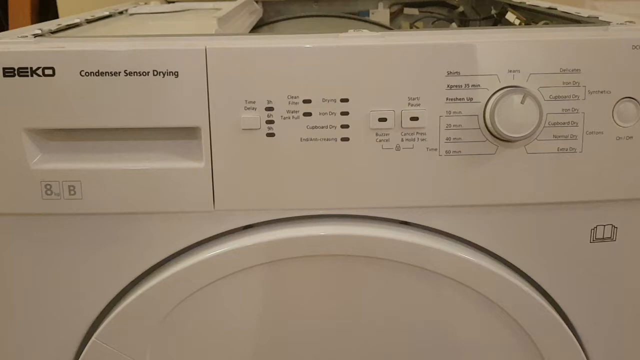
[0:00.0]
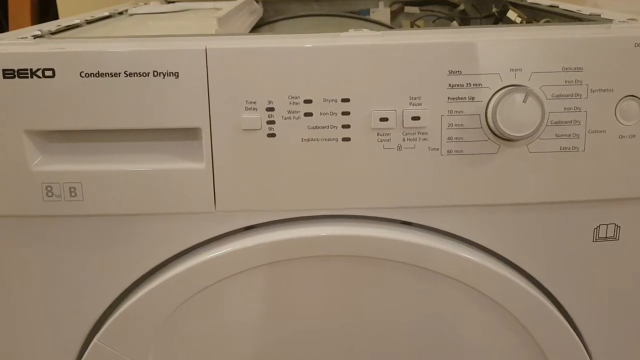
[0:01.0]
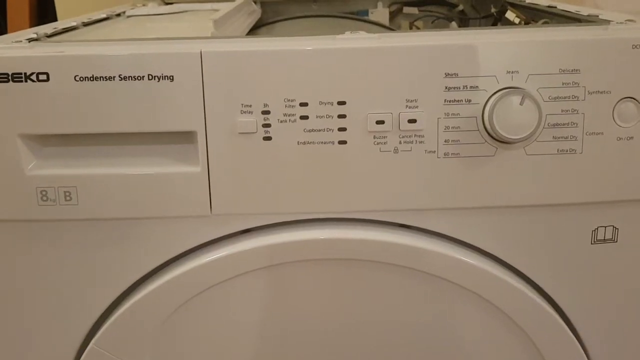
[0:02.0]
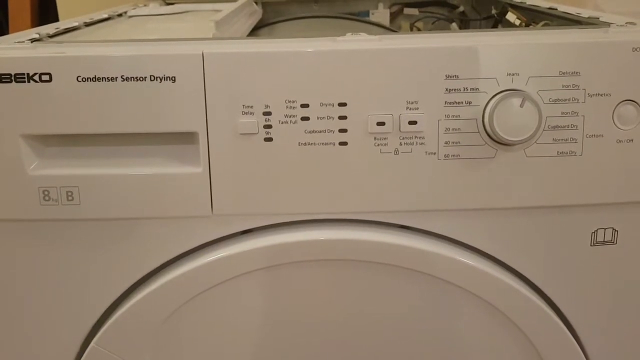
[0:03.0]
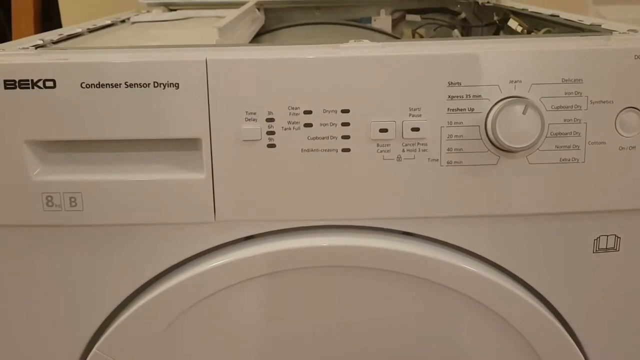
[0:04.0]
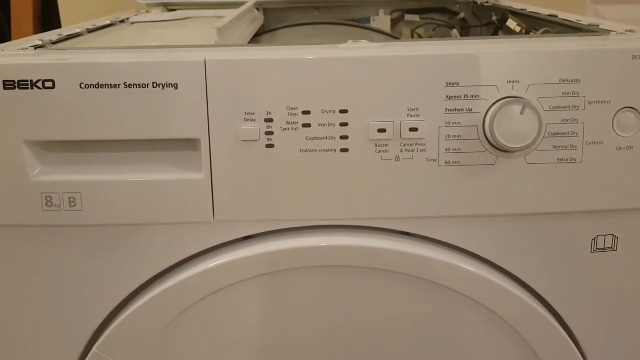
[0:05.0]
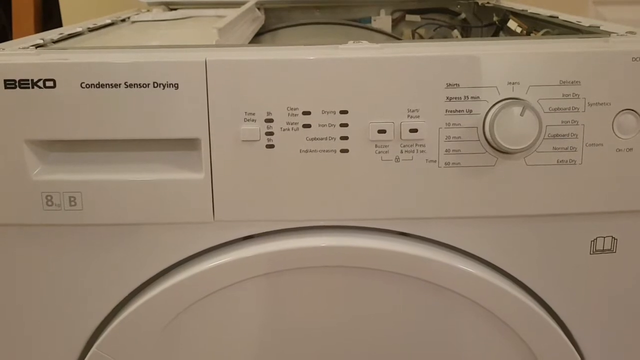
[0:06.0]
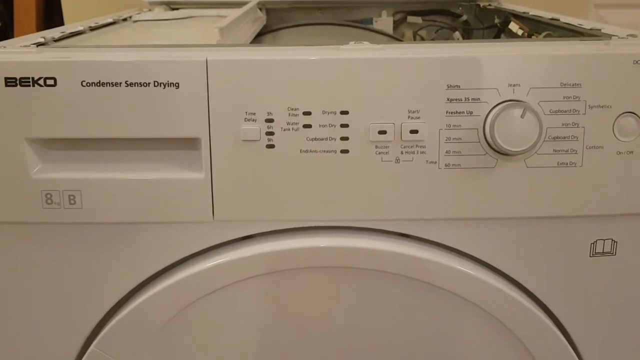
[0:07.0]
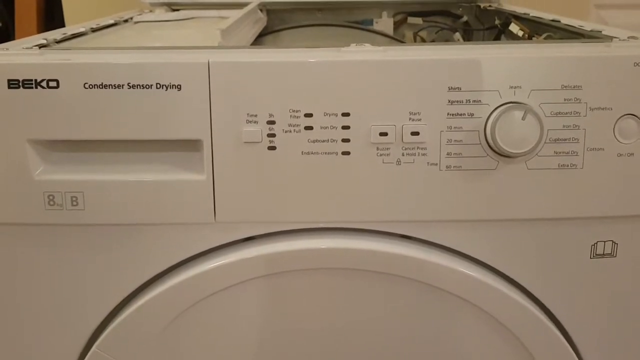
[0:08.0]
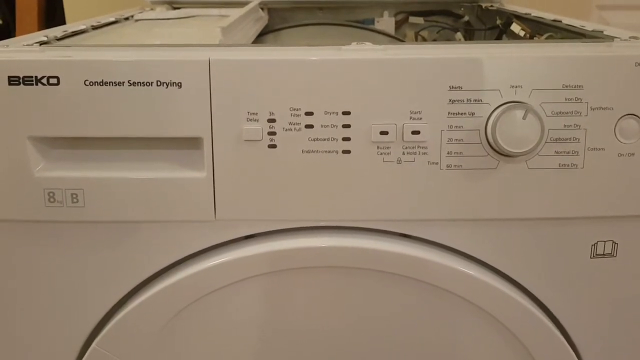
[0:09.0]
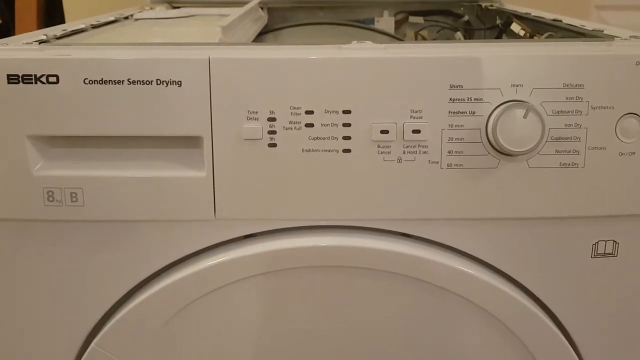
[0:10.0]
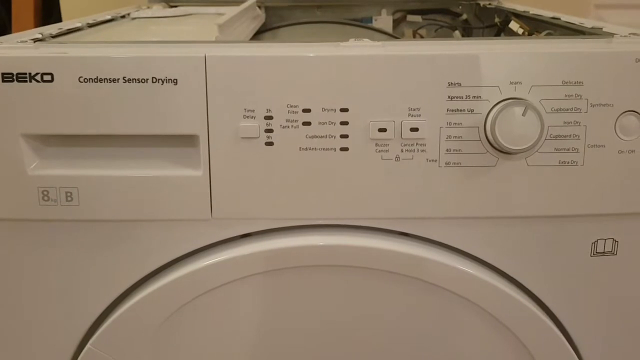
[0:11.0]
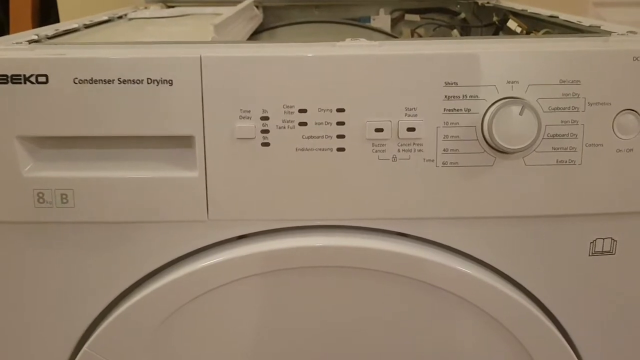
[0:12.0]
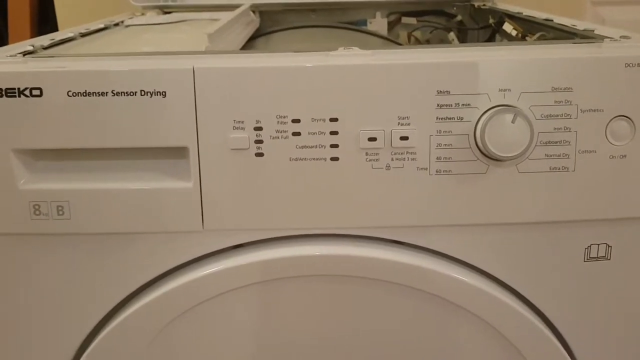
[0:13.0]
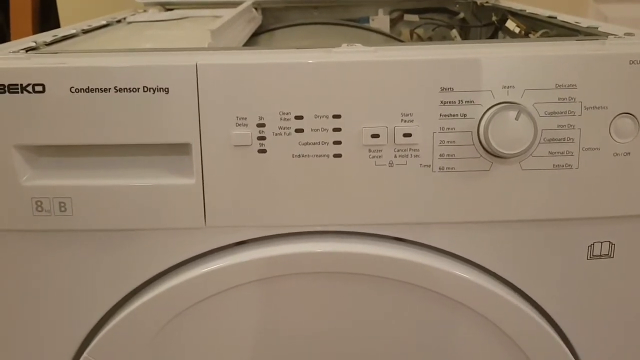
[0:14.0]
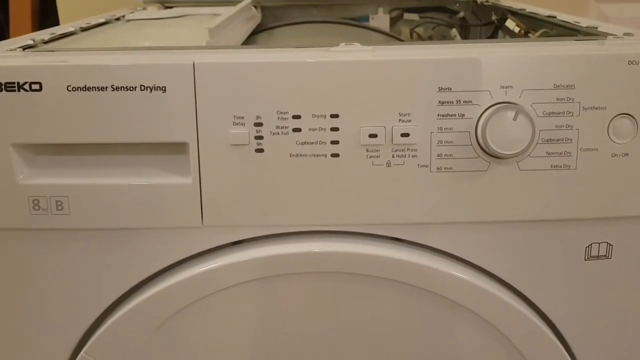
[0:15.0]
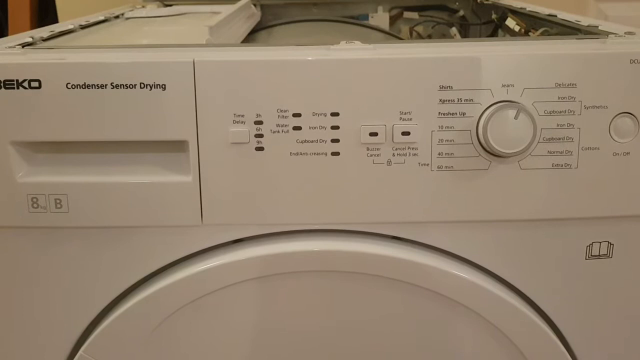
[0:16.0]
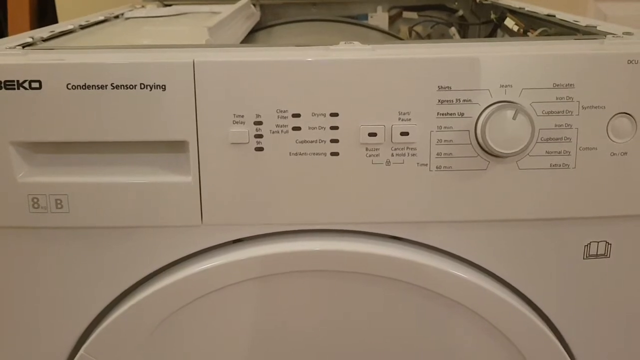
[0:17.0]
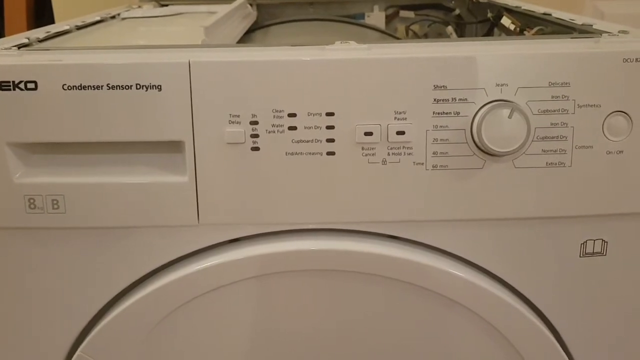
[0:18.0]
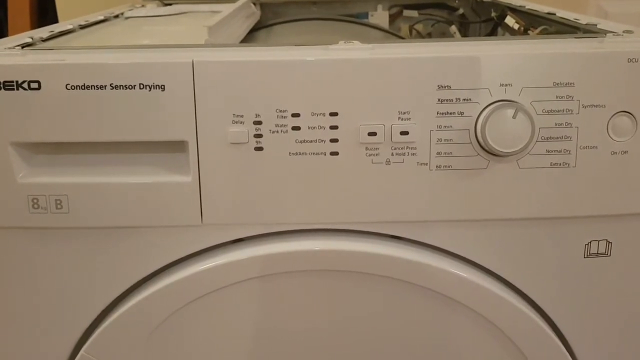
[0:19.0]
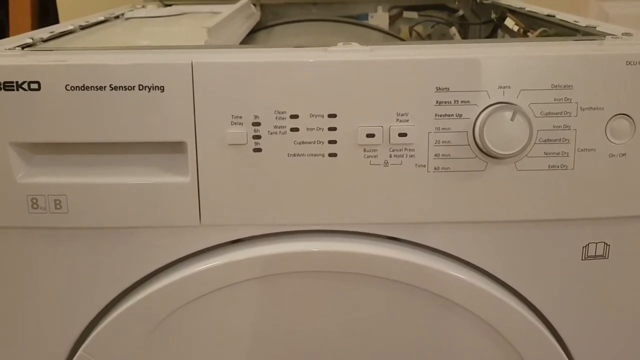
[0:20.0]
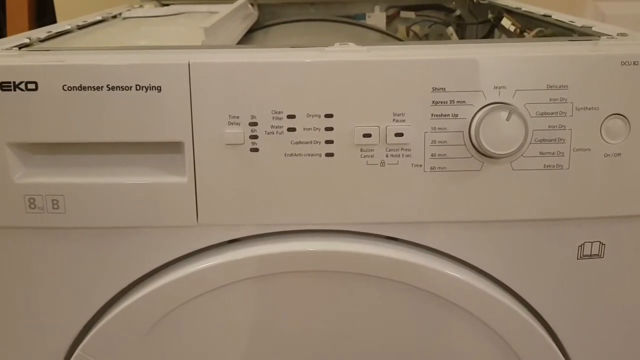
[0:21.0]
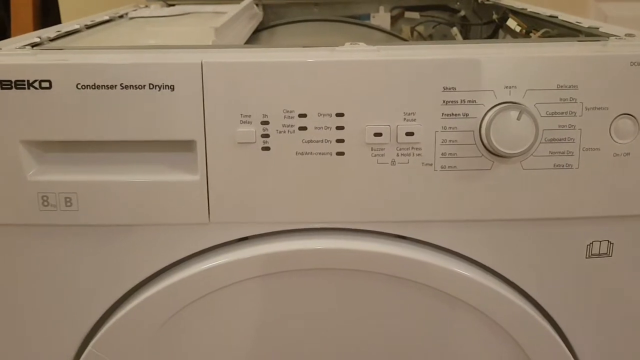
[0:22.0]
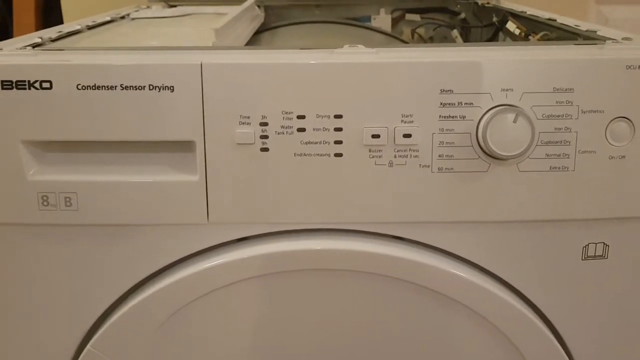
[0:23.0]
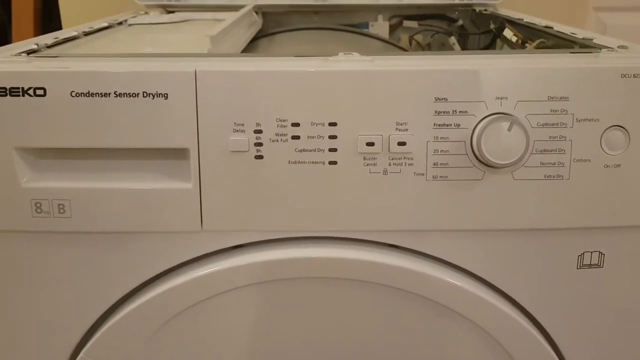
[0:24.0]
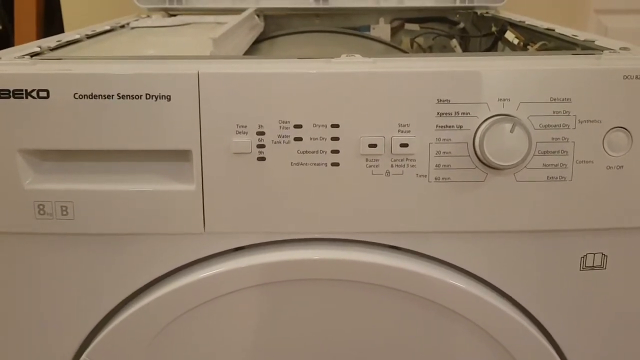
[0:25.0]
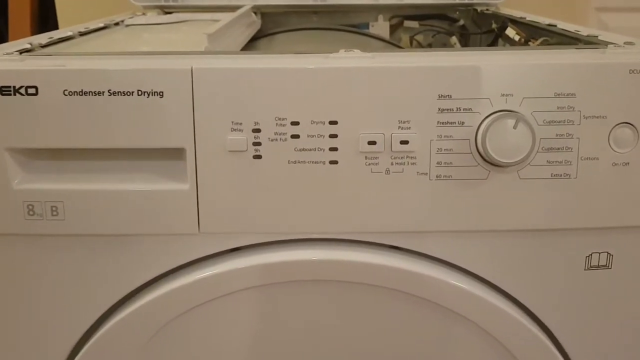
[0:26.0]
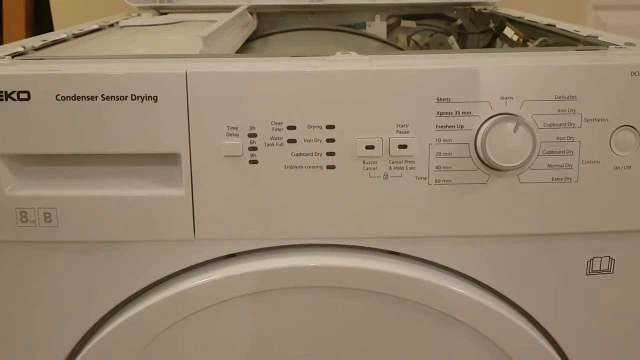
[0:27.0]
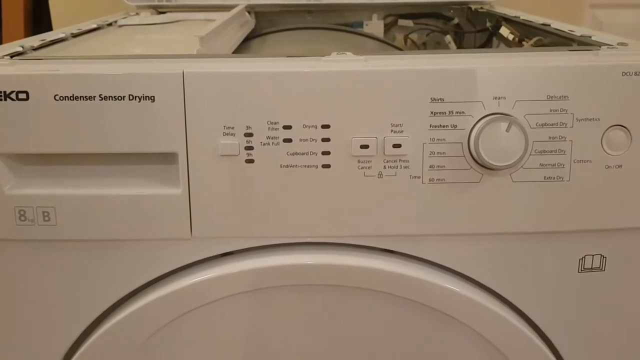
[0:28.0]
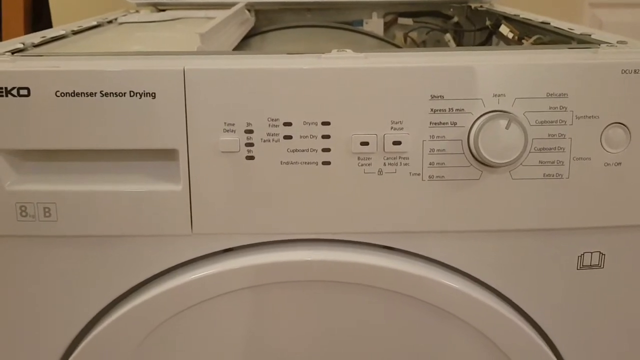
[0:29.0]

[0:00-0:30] The upper part of a dryer is shown, identified as a sensor drying Beko model. All the dials and buttons are on the right side. The camera is a little shaky and stays on the knobs and dials. The upper part of the round door is visible, and the lid on top has been taken off so the inside of the top of the dryer can be seen: lots of wires, the drum, and perhaps where the lint is stored. The dryer looks like it is off. There are several light indicators, none of them lit, and their labels are too blurry to make out. The dryer has many settings, and the knob can point to about 15 different options.